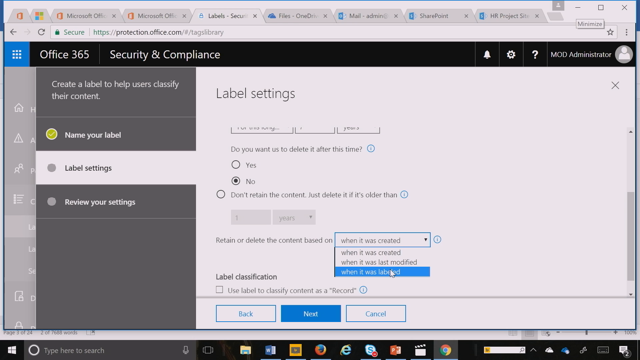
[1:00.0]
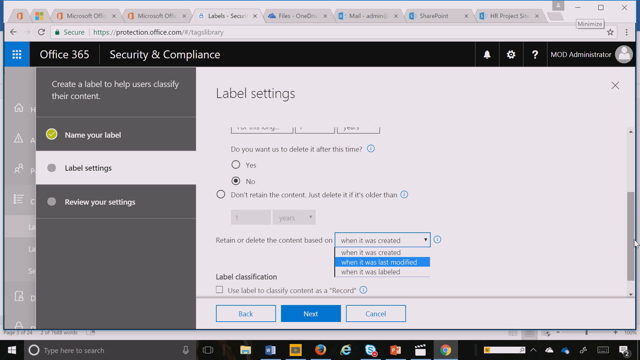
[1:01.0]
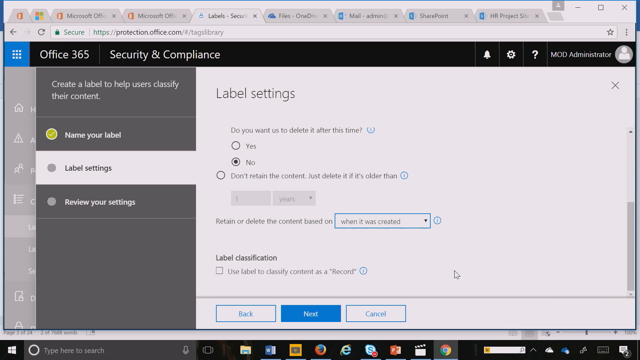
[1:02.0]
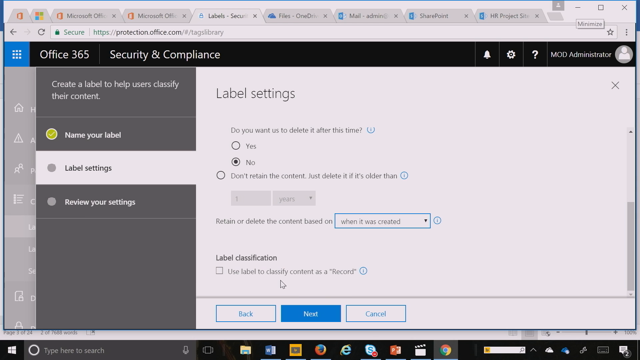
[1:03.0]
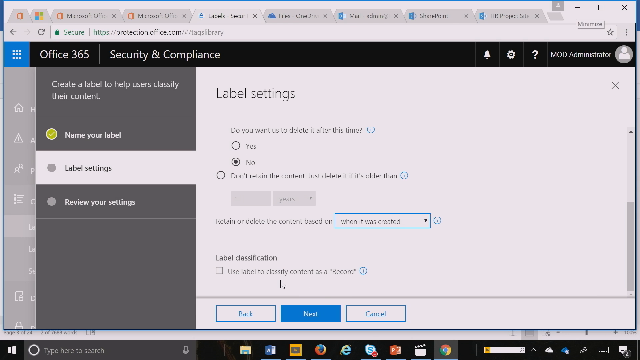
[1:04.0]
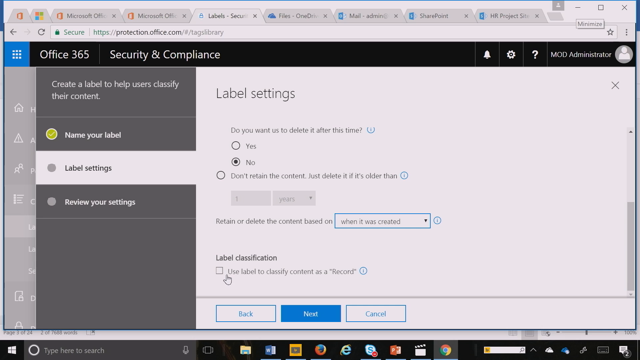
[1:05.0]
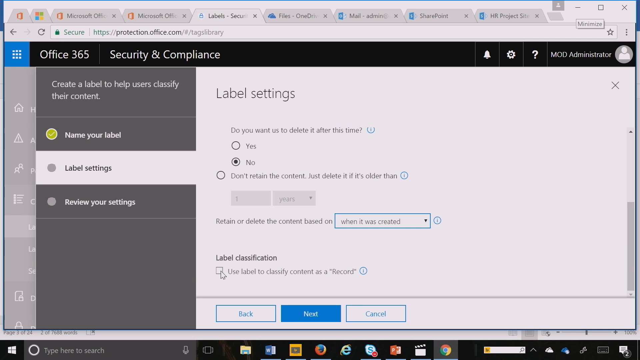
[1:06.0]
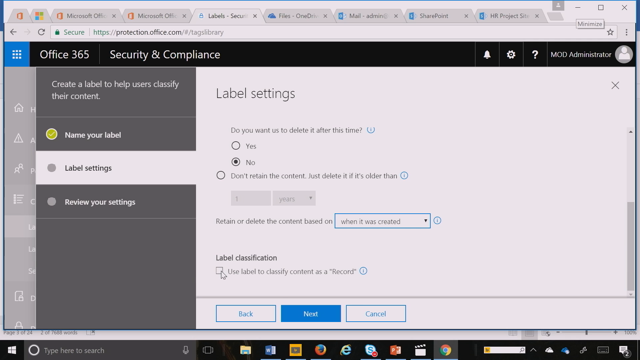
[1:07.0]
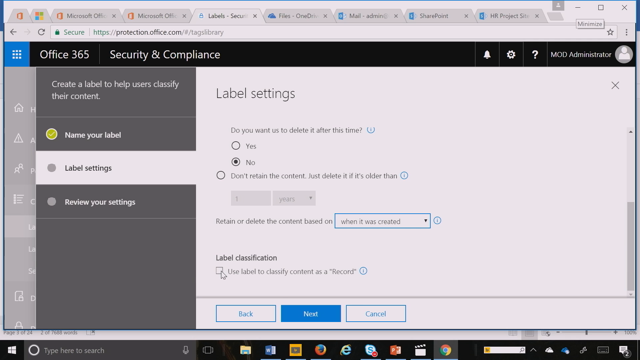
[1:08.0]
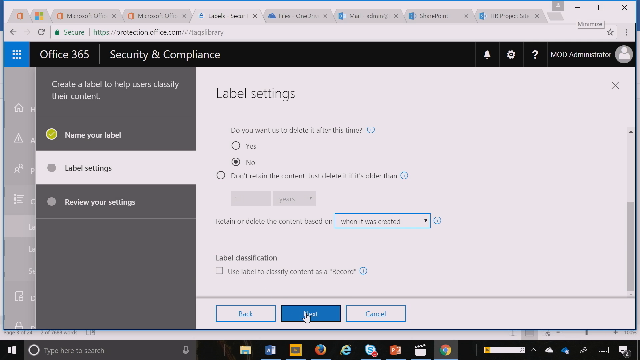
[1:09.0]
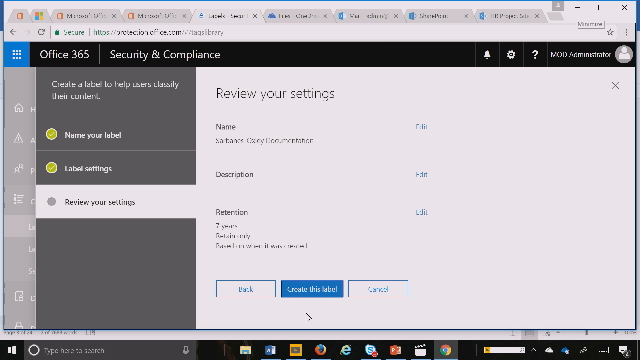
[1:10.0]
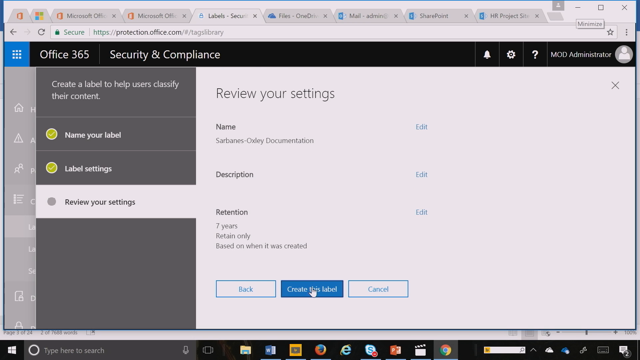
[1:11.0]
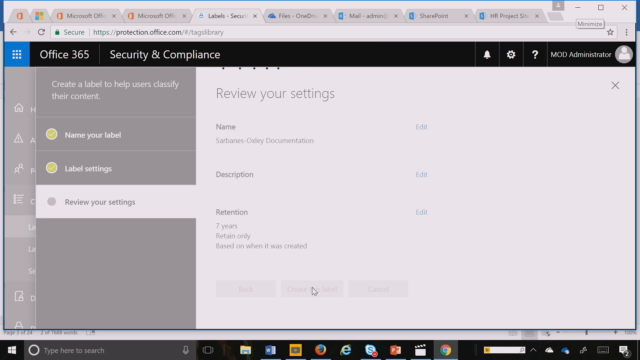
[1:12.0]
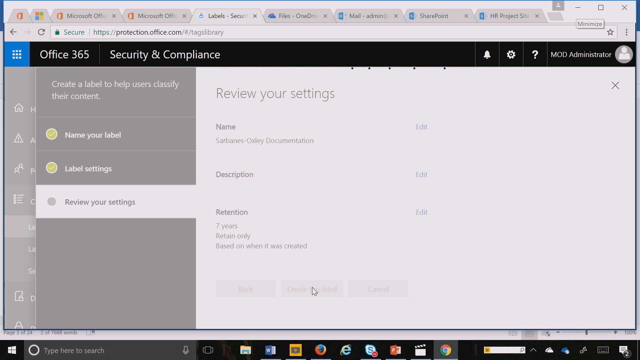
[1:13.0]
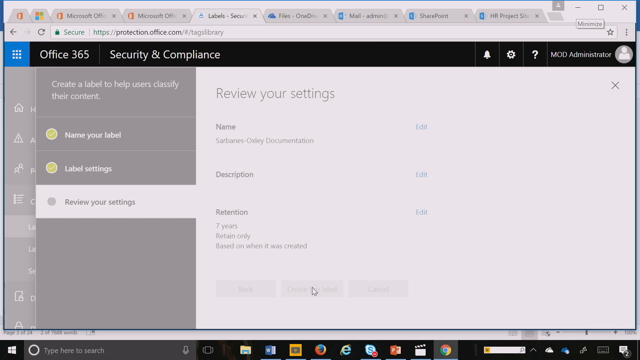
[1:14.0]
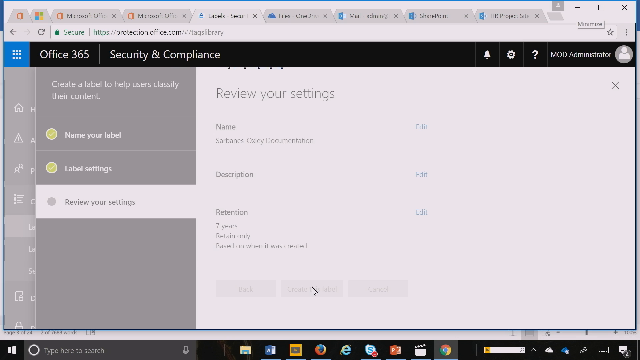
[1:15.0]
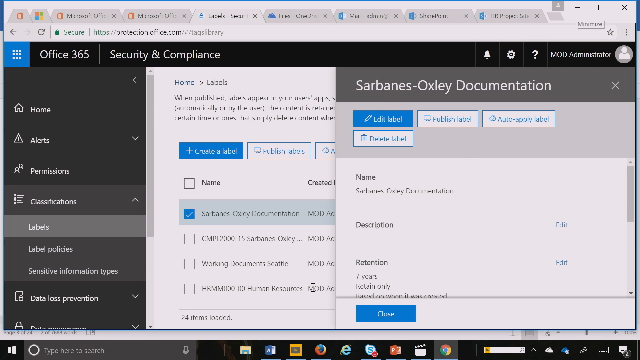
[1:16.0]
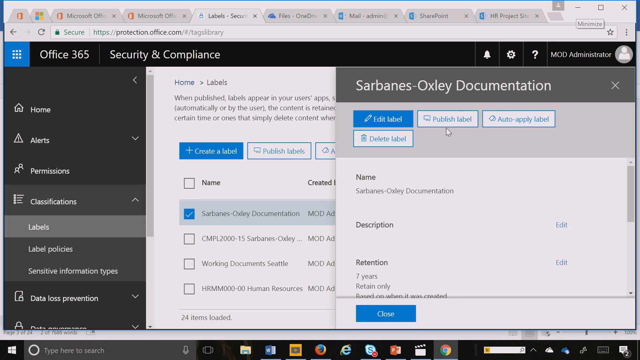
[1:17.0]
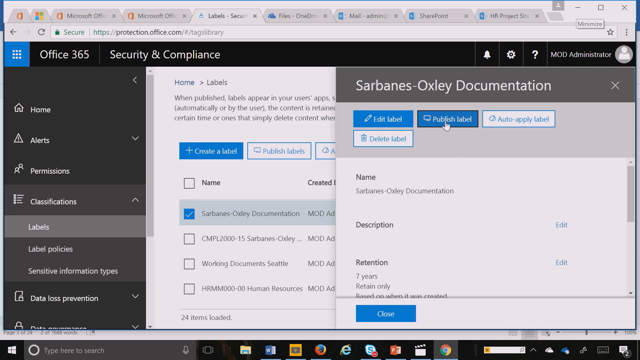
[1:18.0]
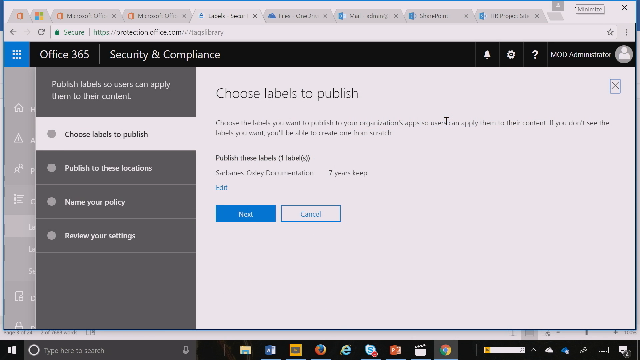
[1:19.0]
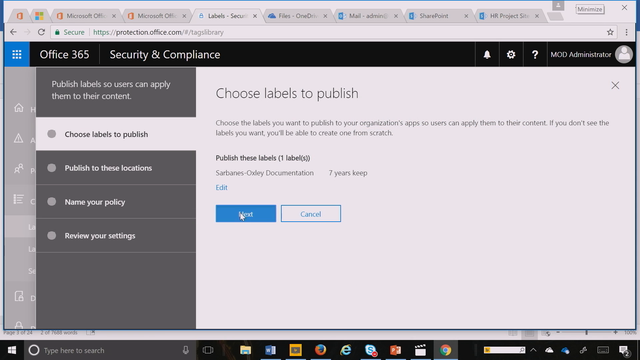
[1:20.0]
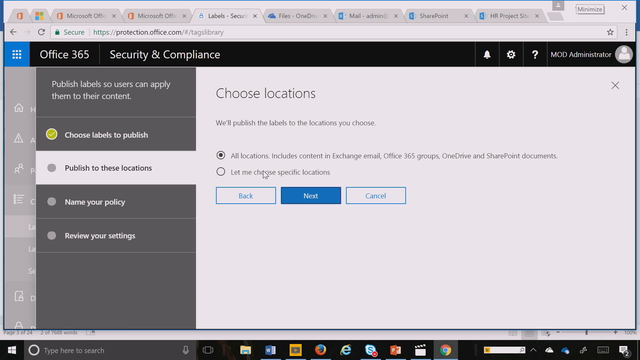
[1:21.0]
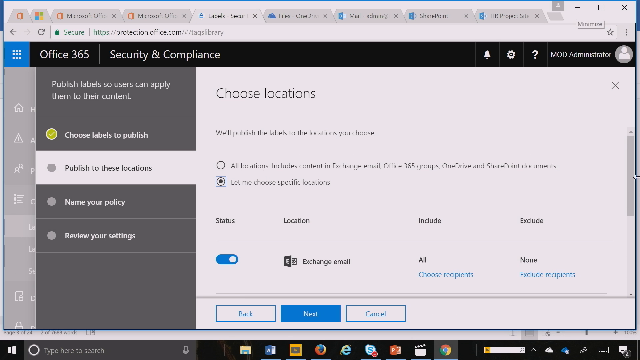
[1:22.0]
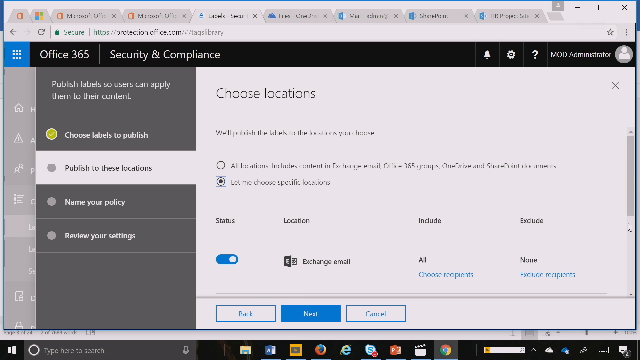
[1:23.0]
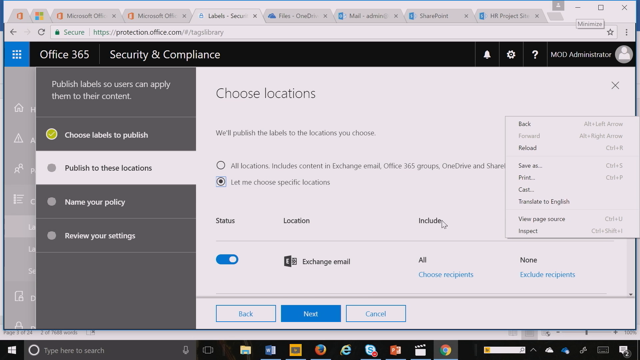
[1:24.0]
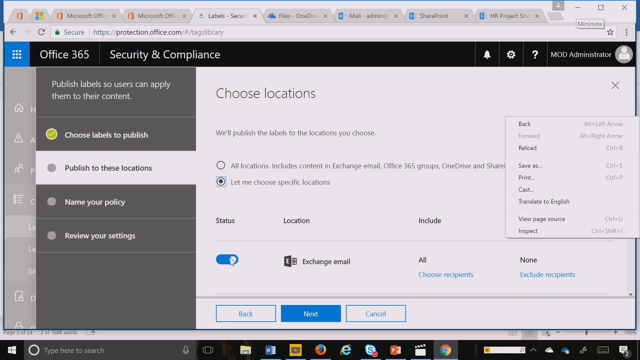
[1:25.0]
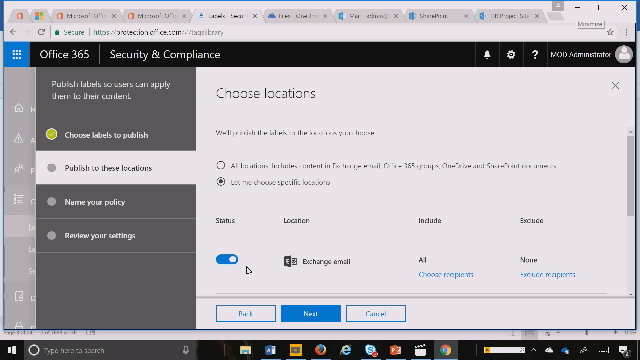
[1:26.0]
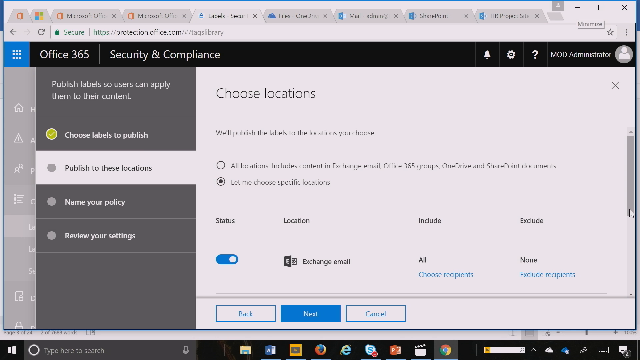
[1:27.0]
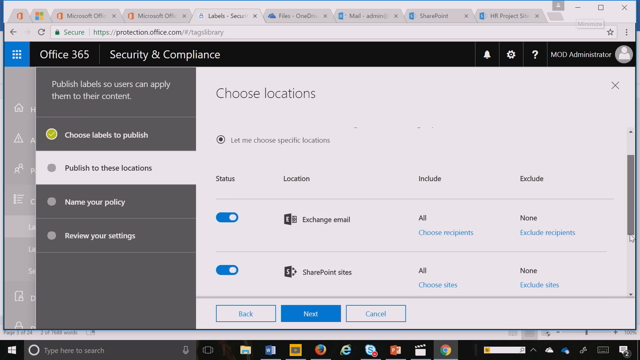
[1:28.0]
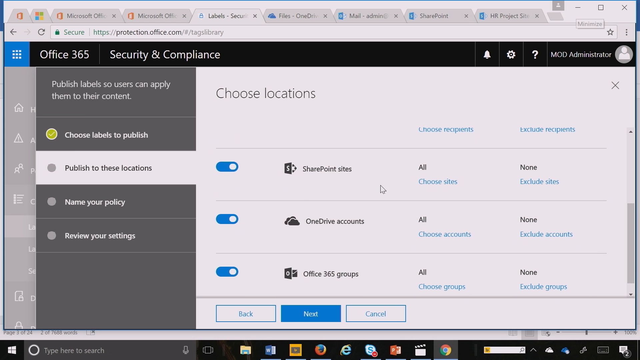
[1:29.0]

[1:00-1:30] A computer screen has a black bar at the top with white text reading "office 365 security and compliance". Underneath is a label or menu with one option selected and highlighted in white, and another header reads "label settings". The person seems to scroll down the page and points the cursor at the part that reads "label classification", which has a box underneath it; the person just points at the box and does not check it. Below are three buttons, one of them blue and reading "next"; the cursor hovers over it and it appears to be clicked. The screen navigates to a page reading "review your settings", again with three buttons at the bottom, one of them blue and reading "create this label", which is hovered over and clicked. The computer loads and then navigates to another window reading "sarbanes / oxley documentation", with some buttons at the top under the header; the cursor hovers over one of them.